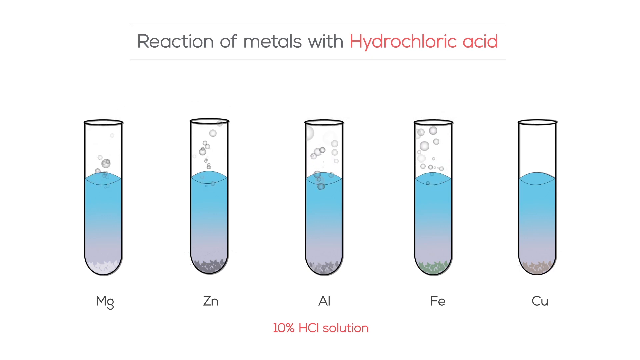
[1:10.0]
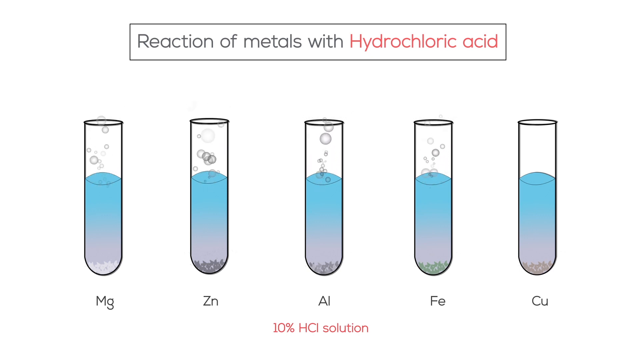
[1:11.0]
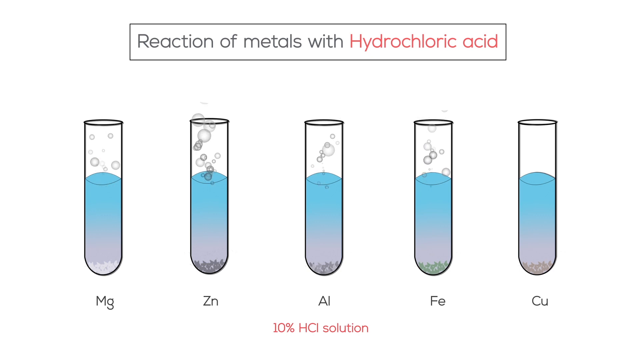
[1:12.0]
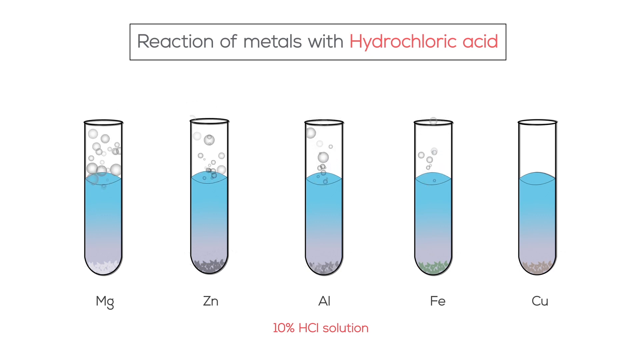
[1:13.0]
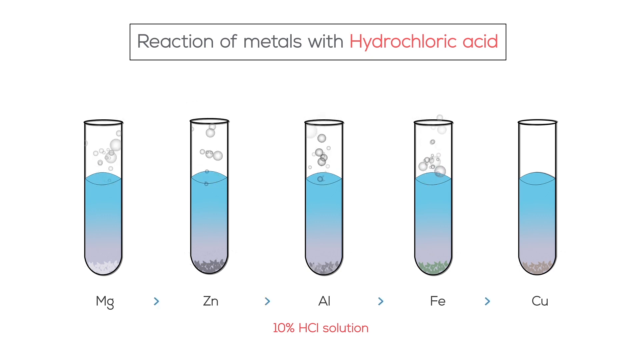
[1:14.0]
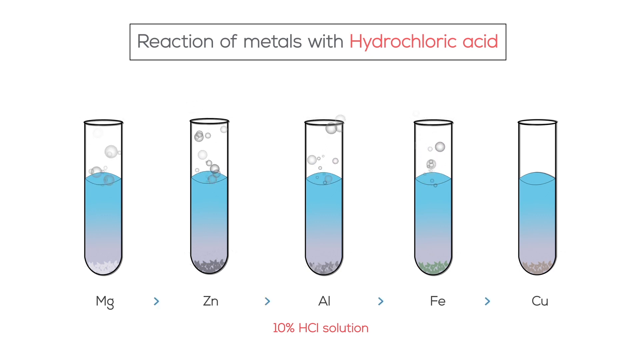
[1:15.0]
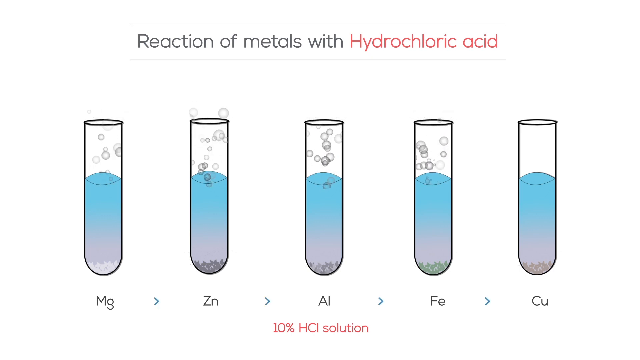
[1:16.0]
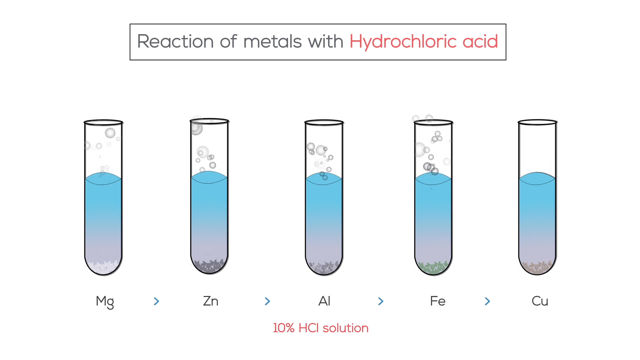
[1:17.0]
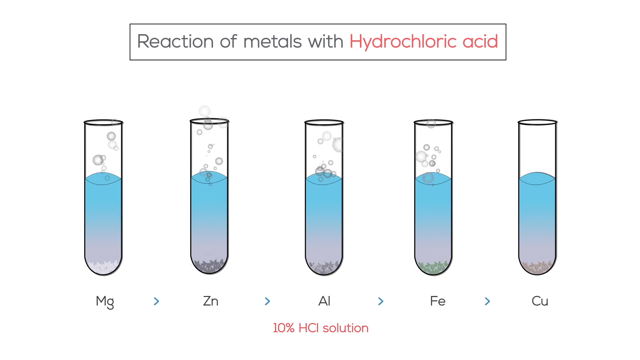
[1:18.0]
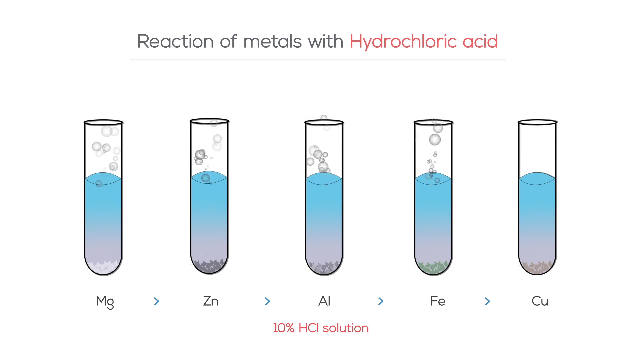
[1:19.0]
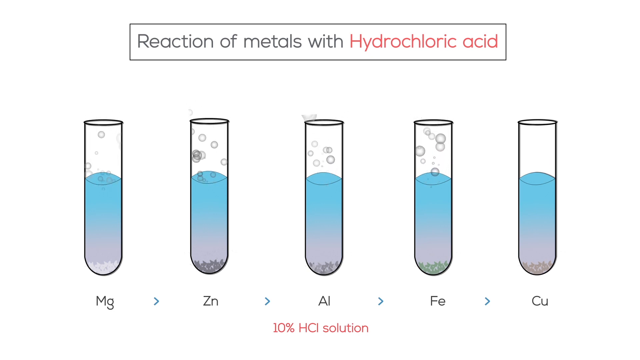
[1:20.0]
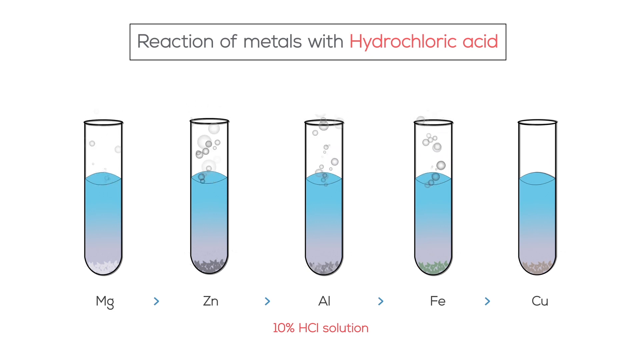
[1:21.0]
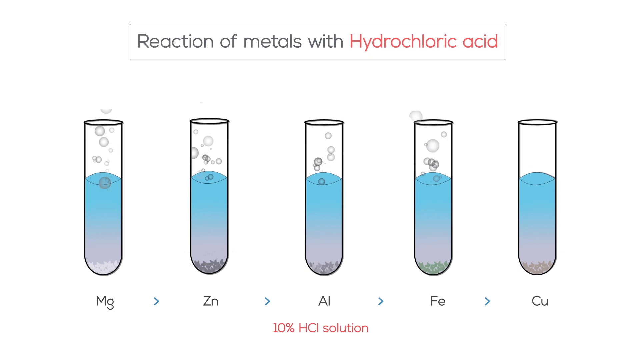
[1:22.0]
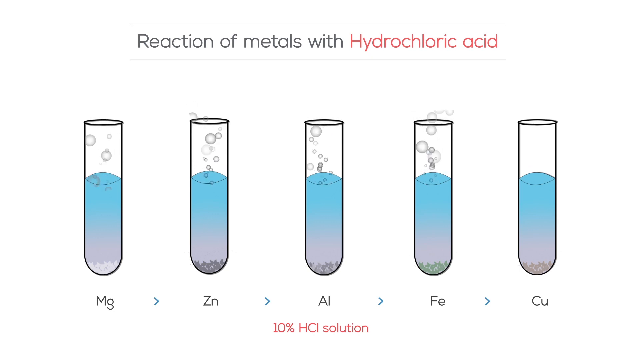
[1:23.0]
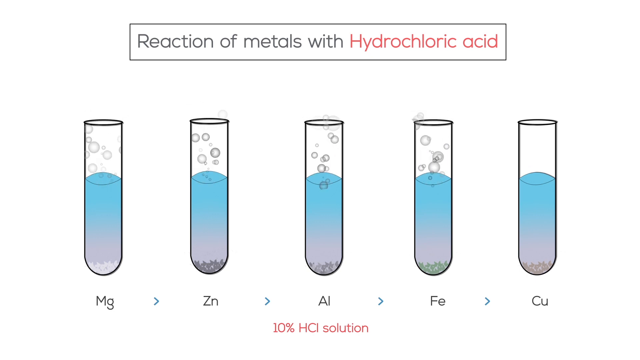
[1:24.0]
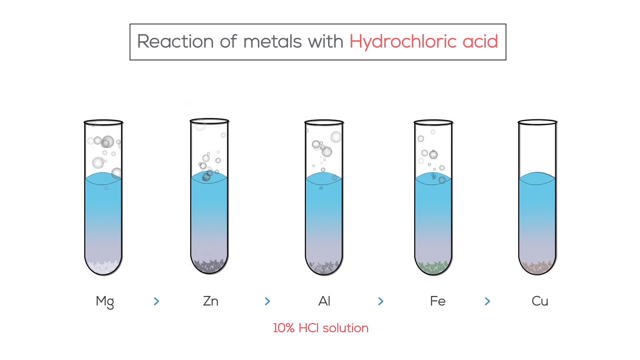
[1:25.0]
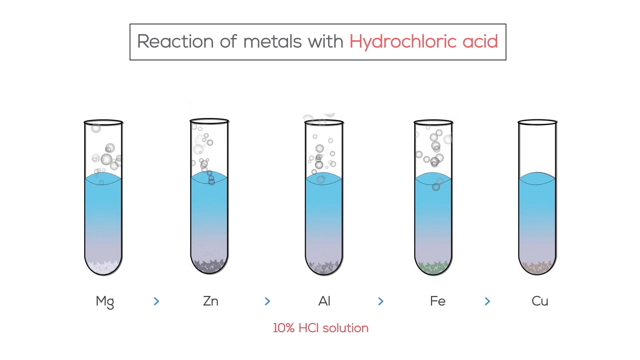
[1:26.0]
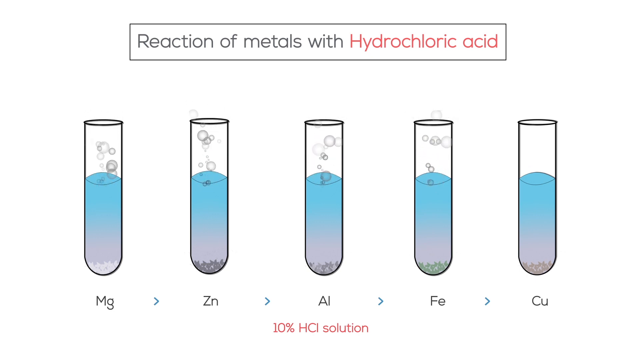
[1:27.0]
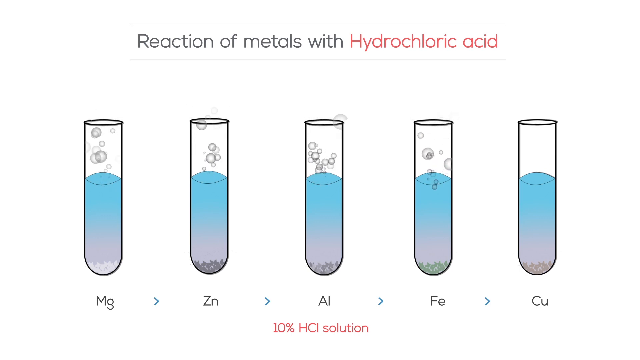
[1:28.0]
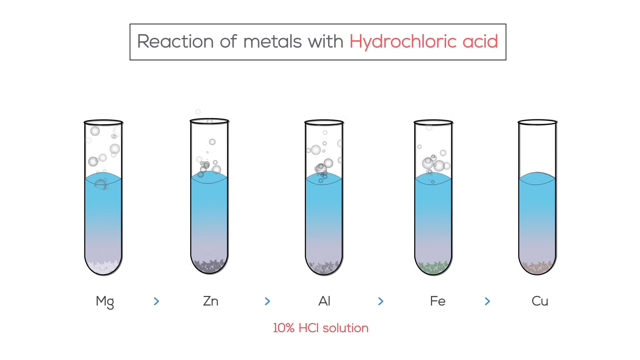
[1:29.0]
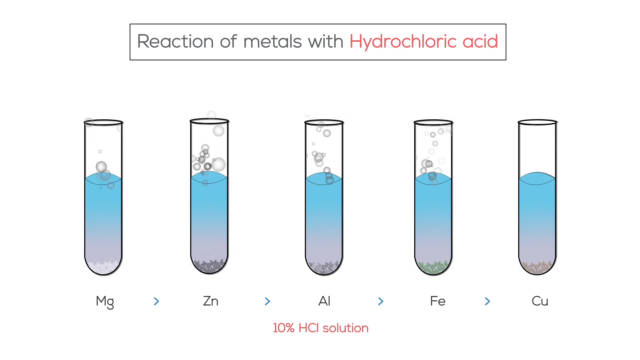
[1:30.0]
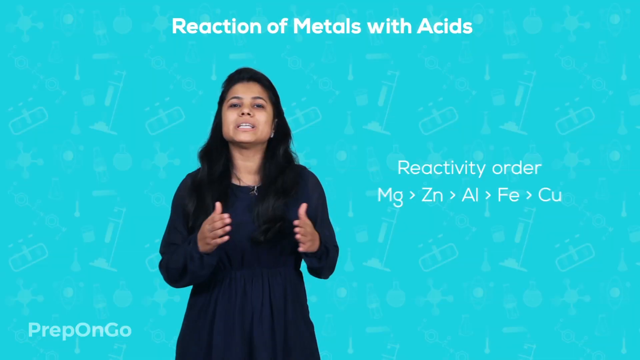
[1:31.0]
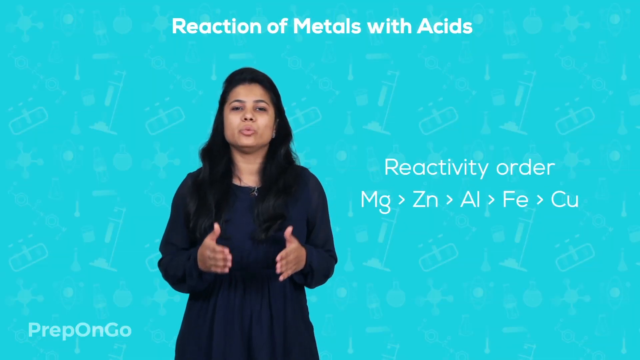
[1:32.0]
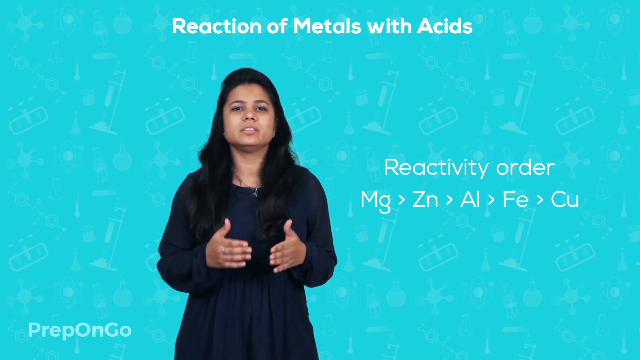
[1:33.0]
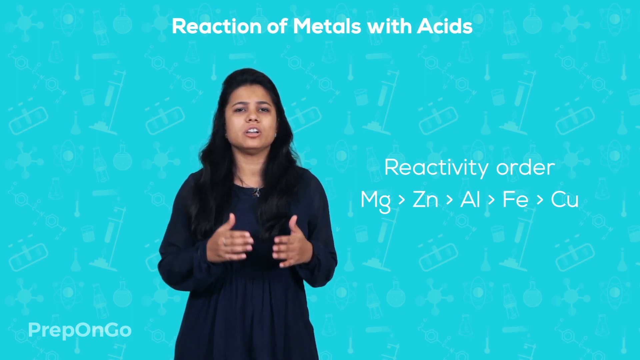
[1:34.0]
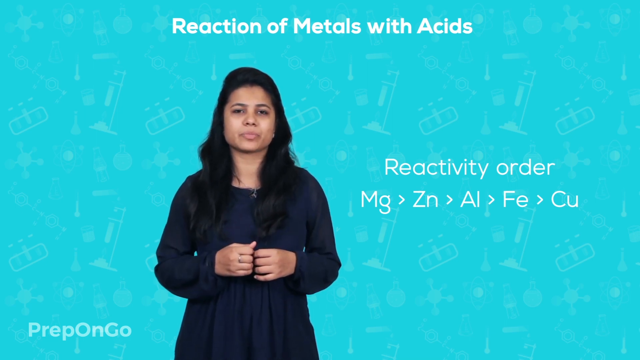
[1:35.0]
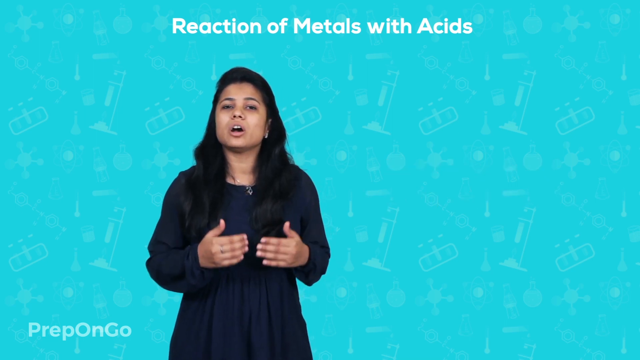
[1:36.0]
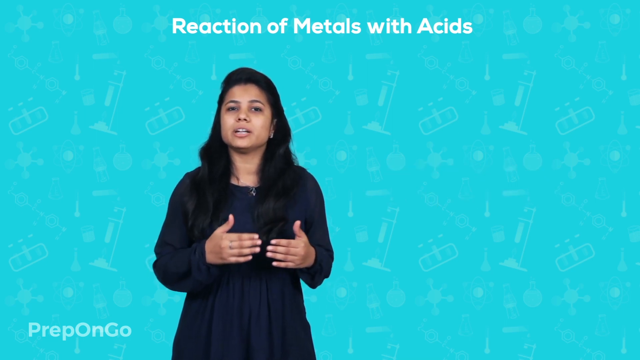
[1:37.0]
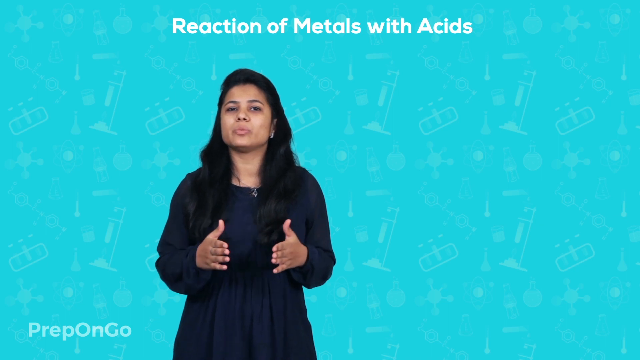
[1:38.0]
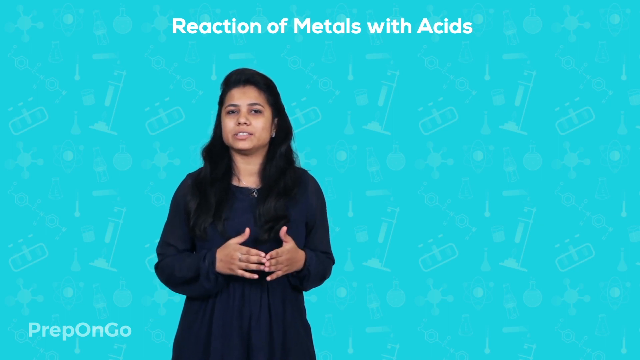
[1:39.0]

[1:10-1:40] The animation of the reaction of metals with hydrochloric acid continues: bubbles come out faster from the test tubes of the more reactive metals, magnesium and zinc, while copper shows no reaction at all, with no bubbles above it. The animation stays on screen for about 10 to 15 seconds before cutting back to the host. The line of text on her right then disappears, and she continues talking. She moves her hands for emphasis, without grand gestures, and keeps a pretty neutral expression.